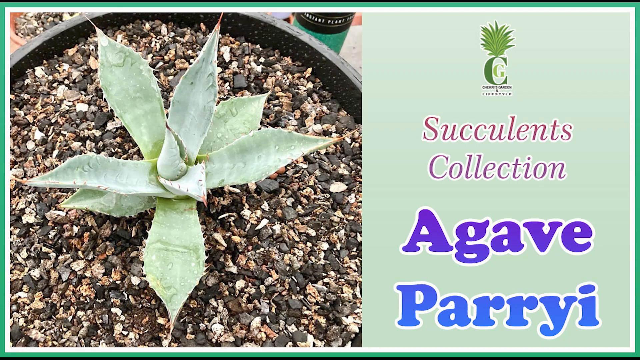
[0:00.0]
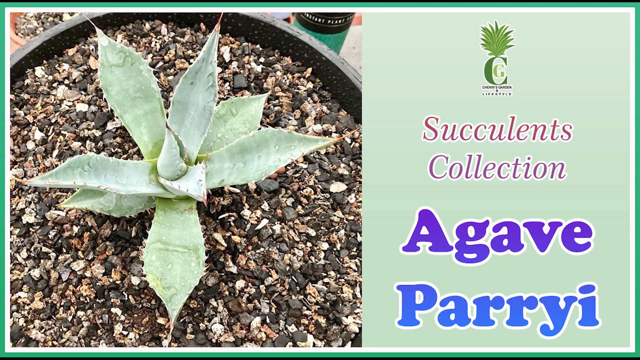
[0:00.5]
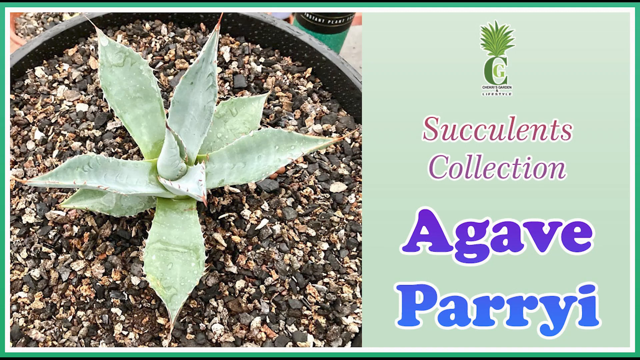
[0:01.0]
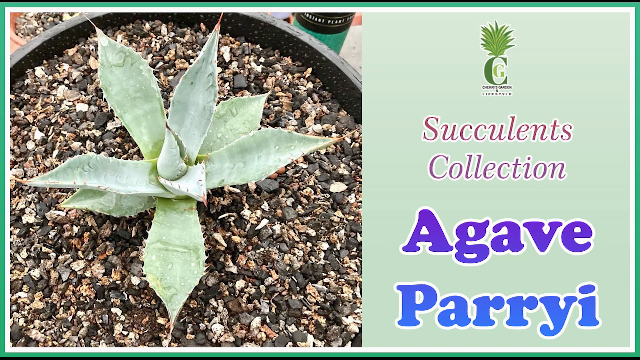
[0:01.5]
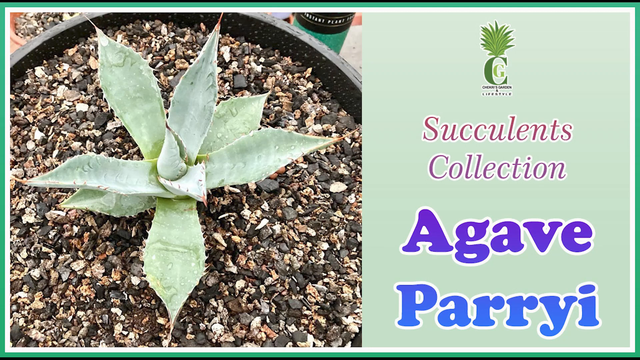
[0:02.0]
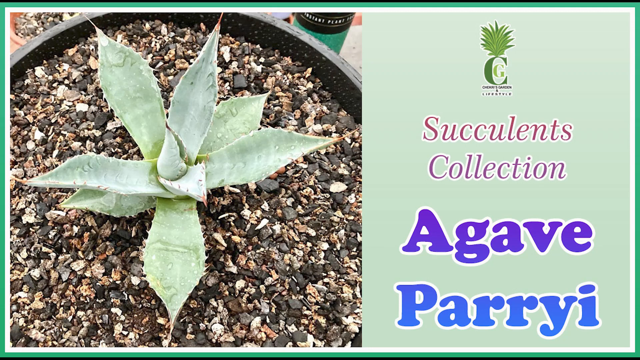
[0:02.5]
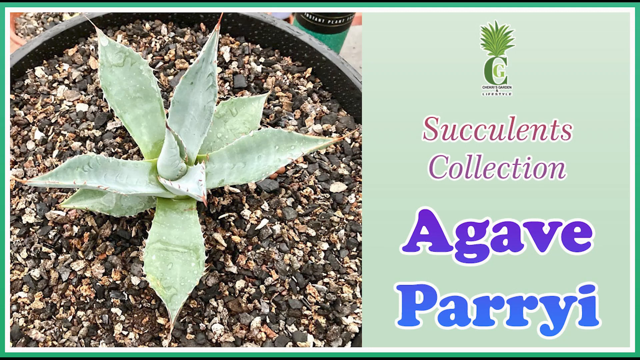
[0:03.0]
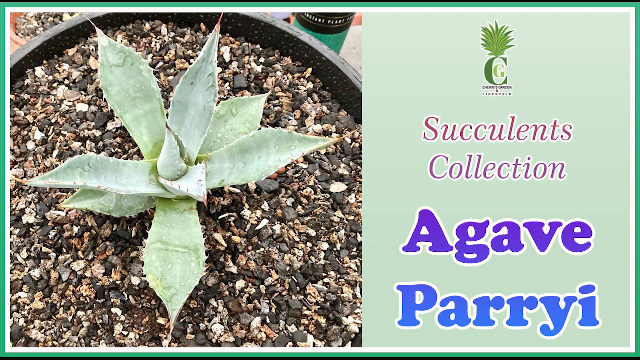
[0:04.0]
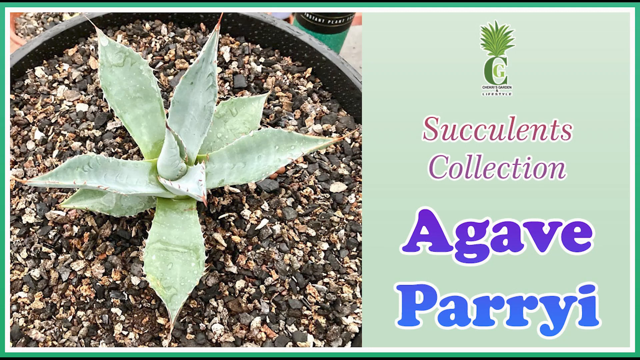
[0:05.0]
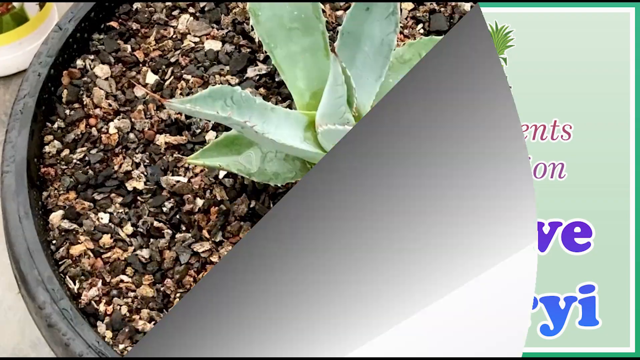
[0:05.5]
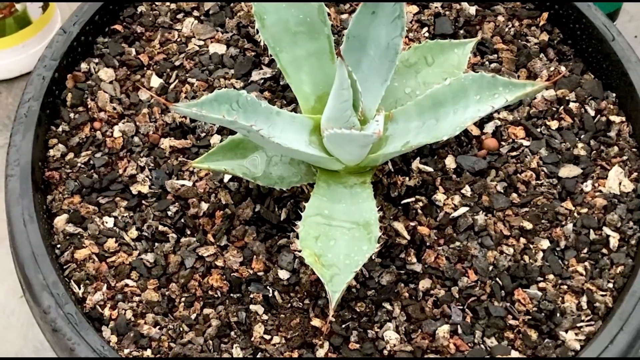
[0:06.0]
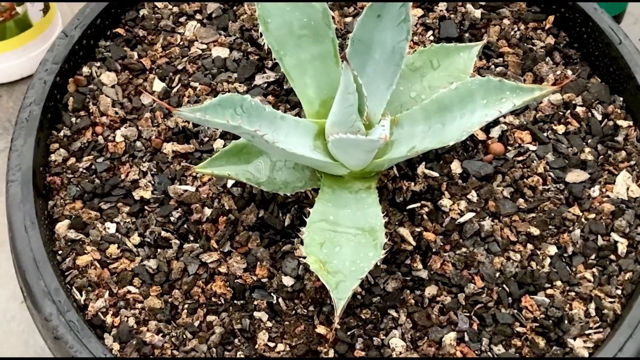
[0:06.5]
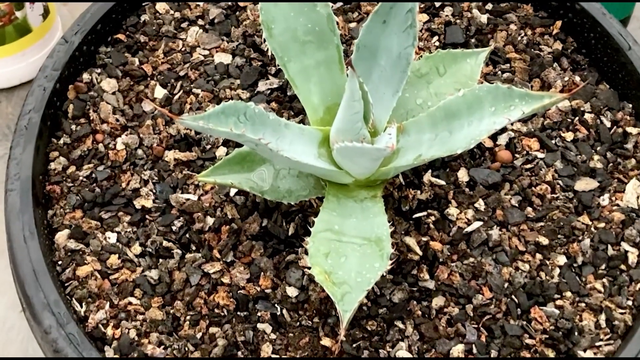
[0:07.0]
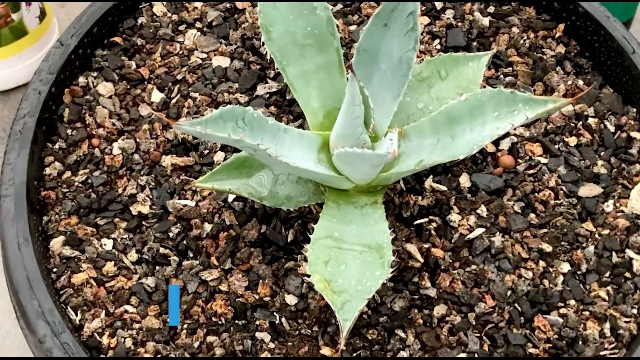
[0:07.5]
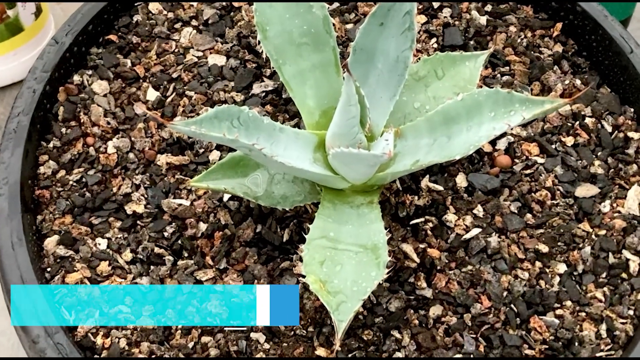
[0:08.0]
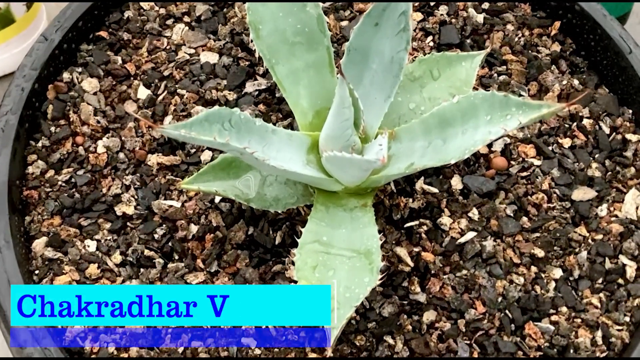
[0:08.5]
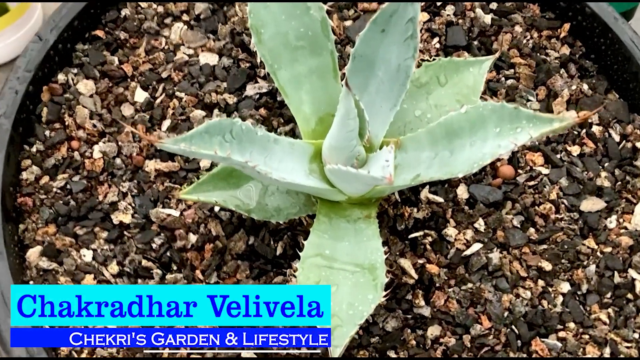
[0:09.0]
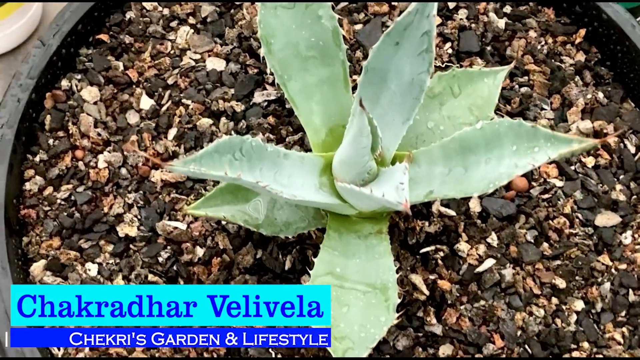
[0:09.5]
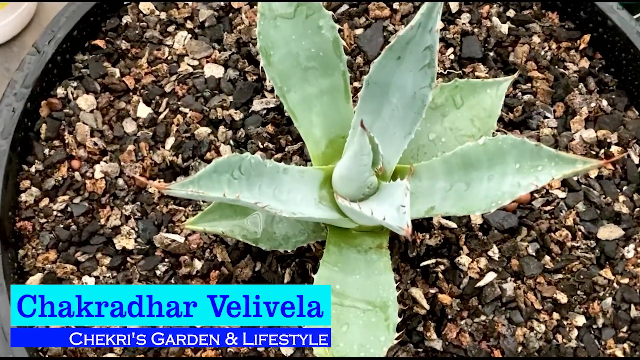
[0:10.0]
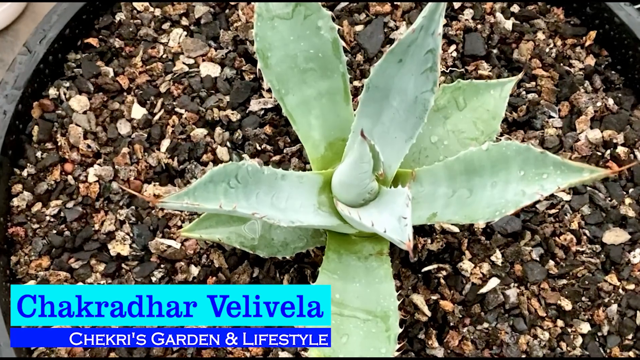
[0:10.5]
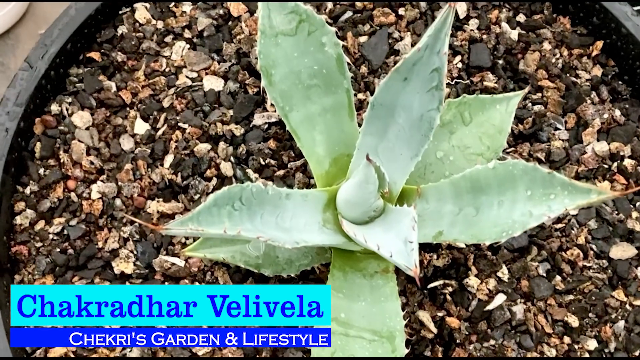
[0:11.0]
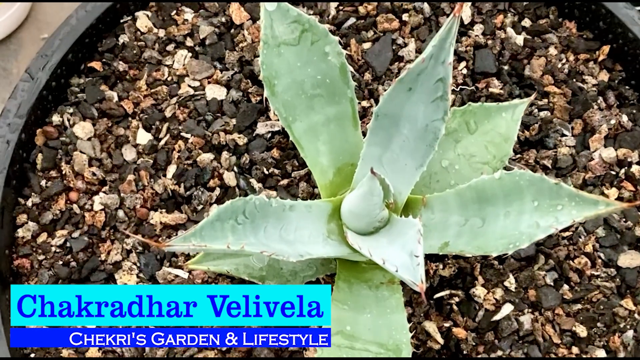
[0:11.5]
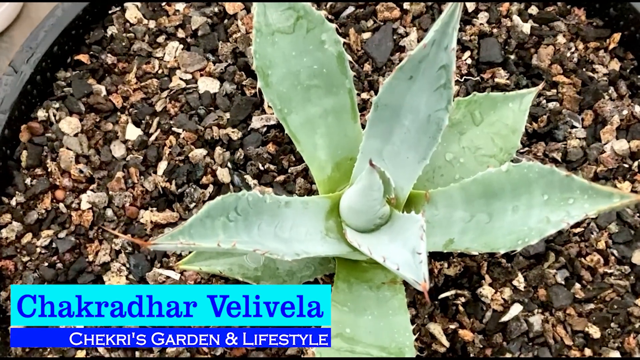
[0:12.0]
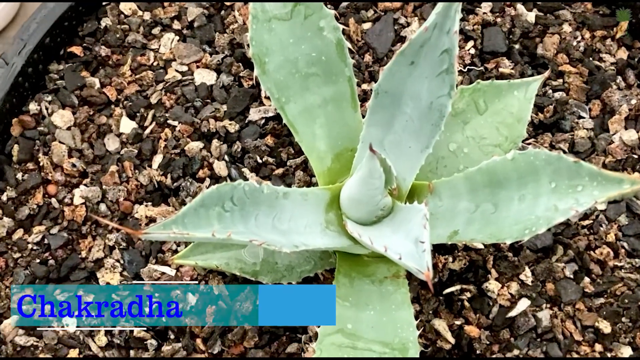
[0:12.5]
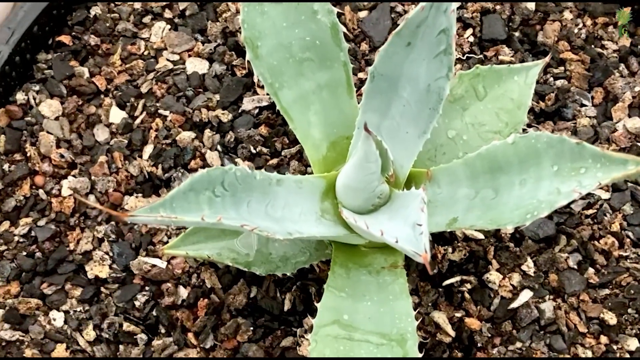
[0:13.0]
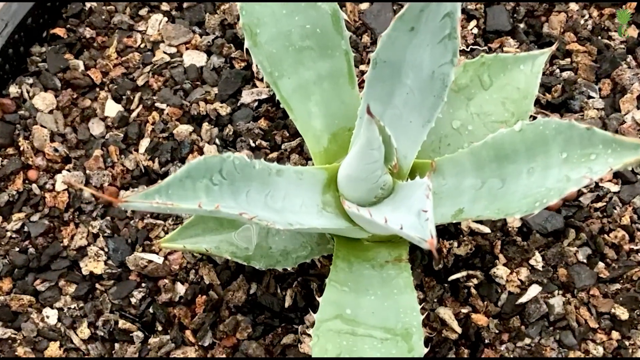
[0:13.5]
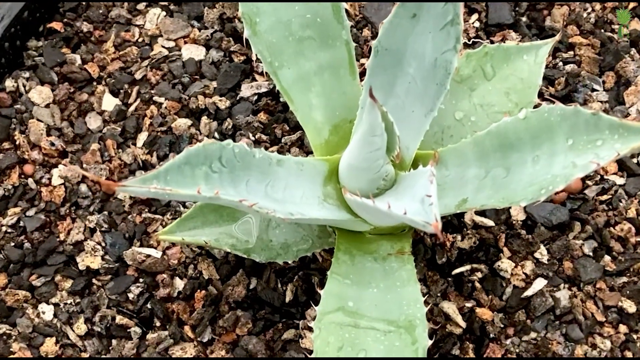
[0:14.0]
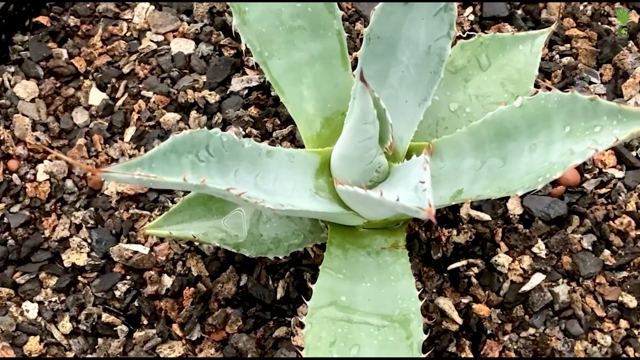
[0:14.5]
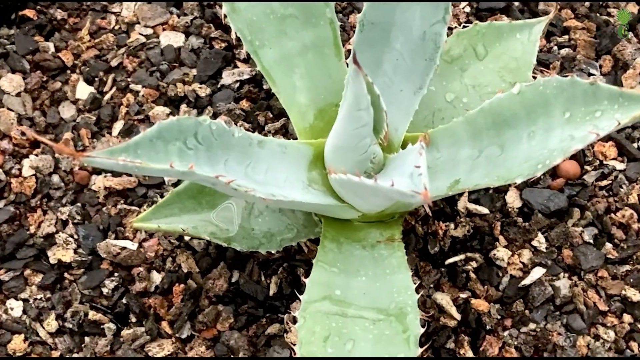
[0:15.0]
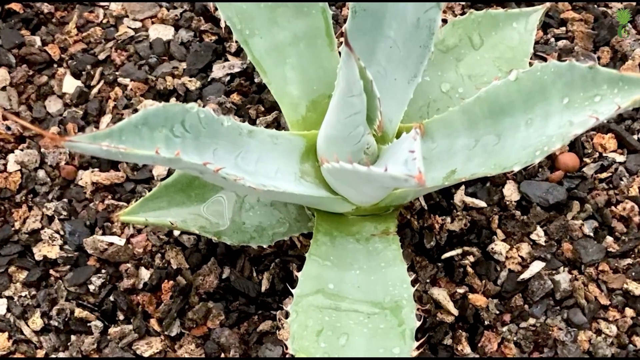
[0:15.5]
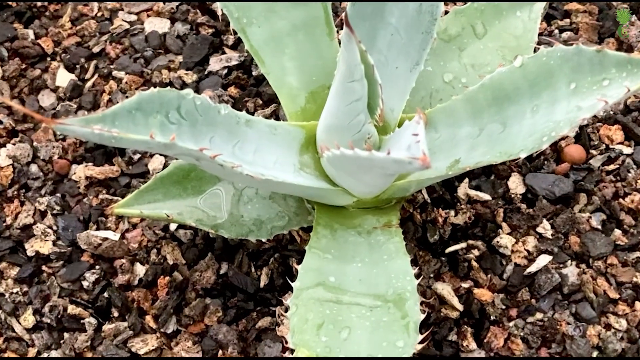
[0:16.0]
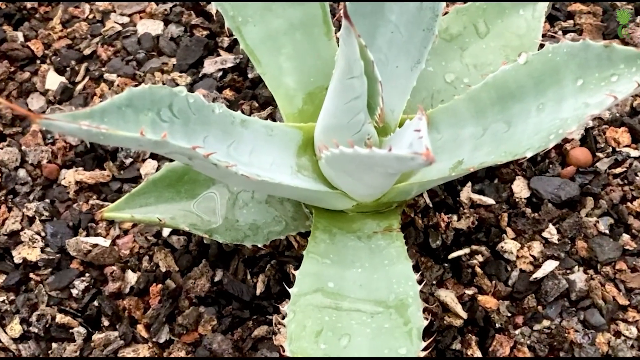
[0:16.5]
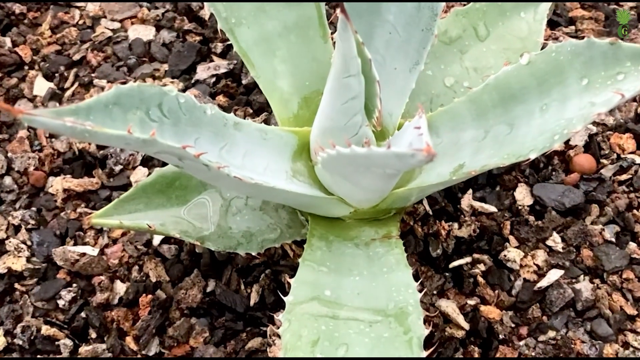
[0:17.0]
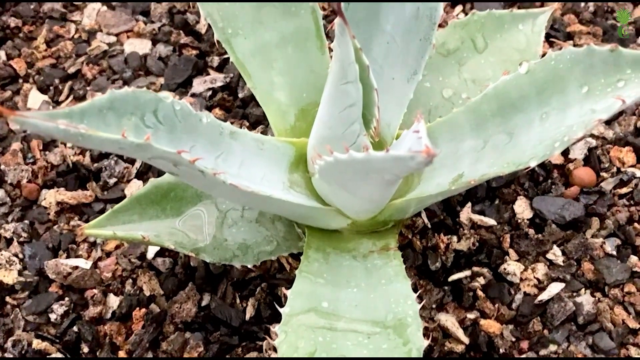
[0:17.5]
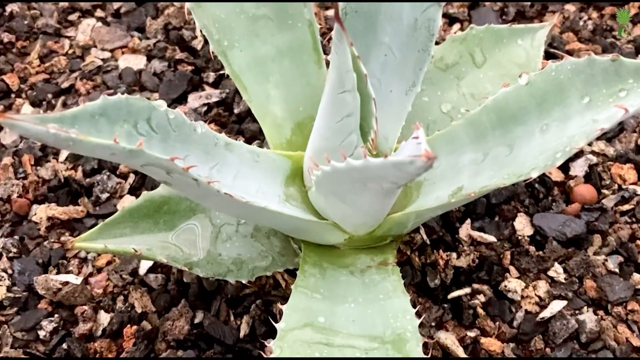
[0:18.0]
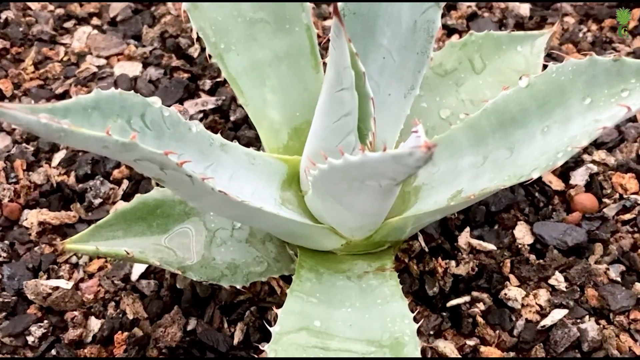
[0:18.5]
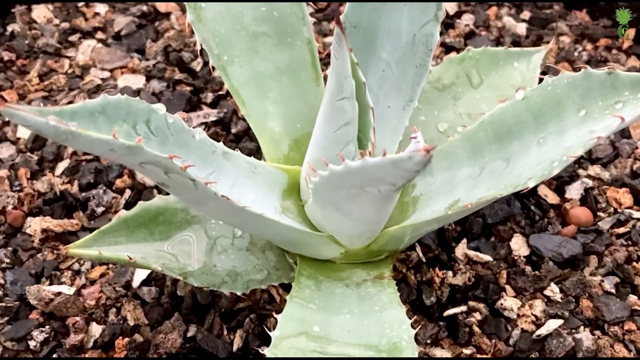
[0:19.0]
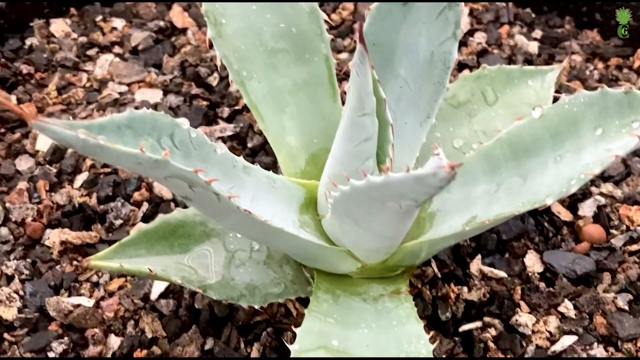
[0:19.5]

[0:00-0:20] The screen is divided in half. On the left is an image of a sage green succulent plant in a pot. On the right, against a light green background, is a logo made of the letter C with the letter G inside it. On top of the C is an image that looks almost like the top of a pineapple, though it is apparently meant to be a succulent. Underneath, in a sort of lilac-mauve writing, it says "succulents collection." Below that, in bold purple print, is "agave," and below that, in a dark bluish colour, the word "parry," possibly the name of the plant on the left. The writing then disappears as if the screen has been folded back, revealing a full picture of the succulent in a dark brown pot that is apparently plastic, though it could be ceramic. In the middle of the pot is a green succulent sitting in soil, and on top there are some gravel stones and bits of dried plant matter or tree bark.